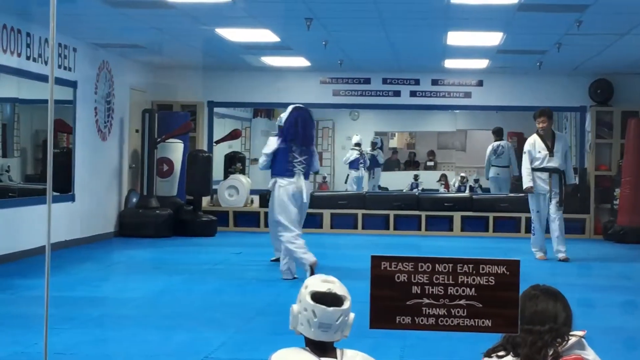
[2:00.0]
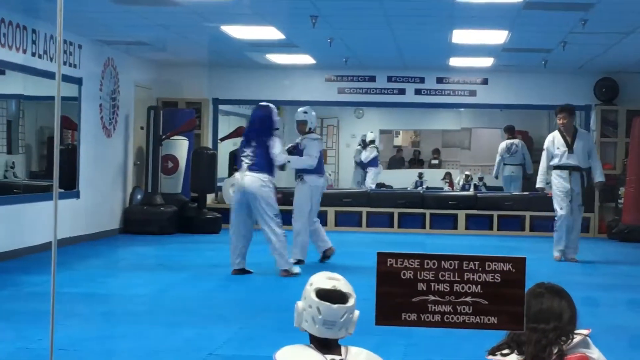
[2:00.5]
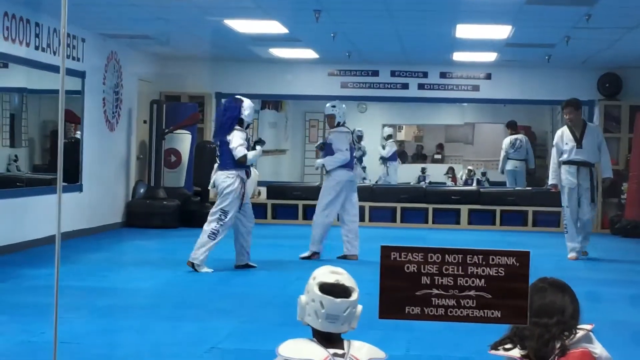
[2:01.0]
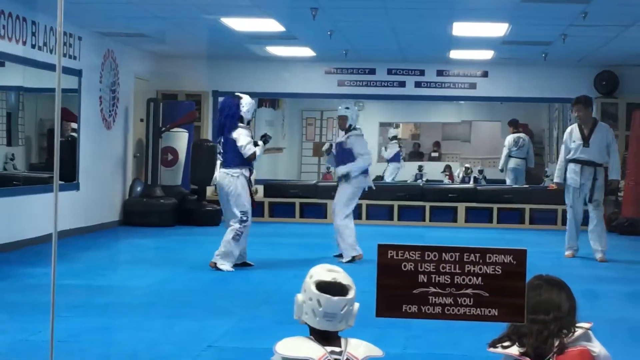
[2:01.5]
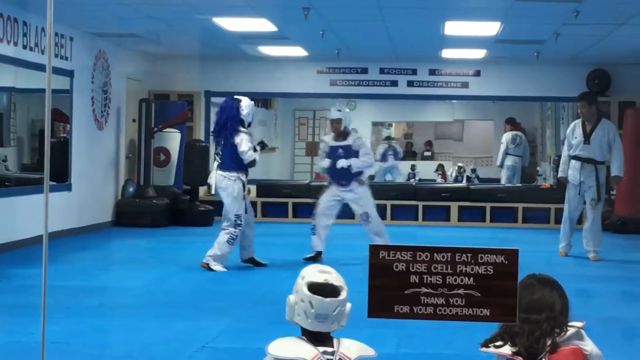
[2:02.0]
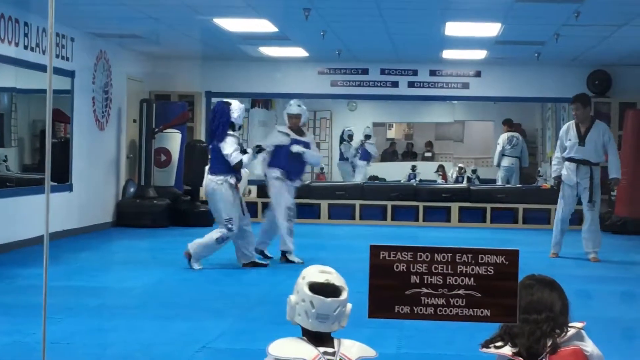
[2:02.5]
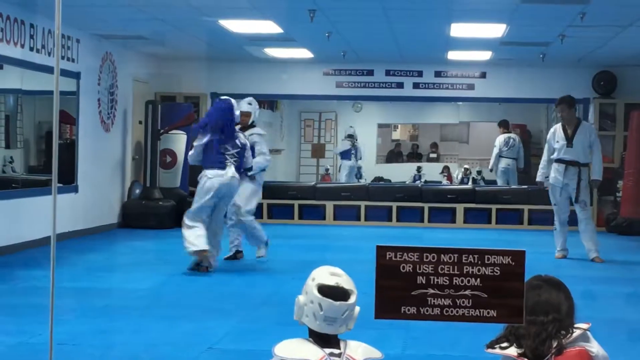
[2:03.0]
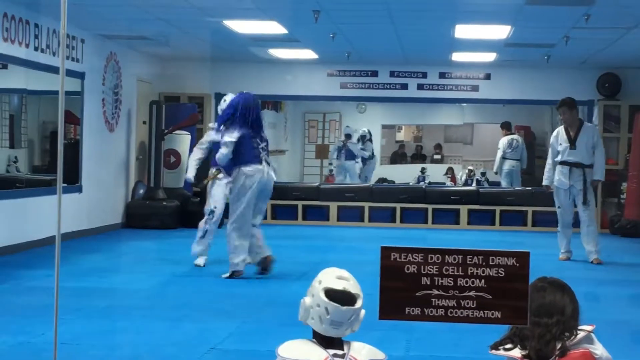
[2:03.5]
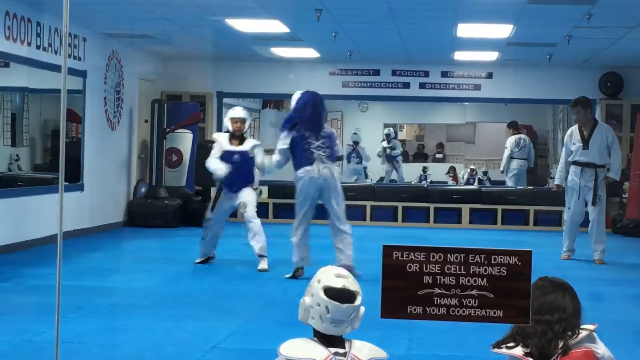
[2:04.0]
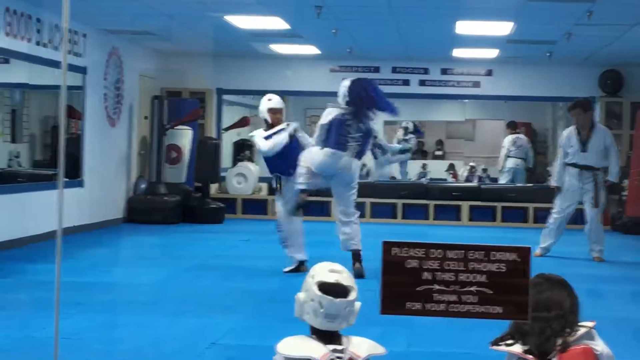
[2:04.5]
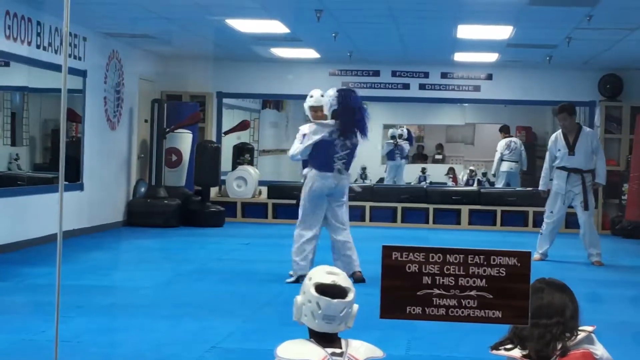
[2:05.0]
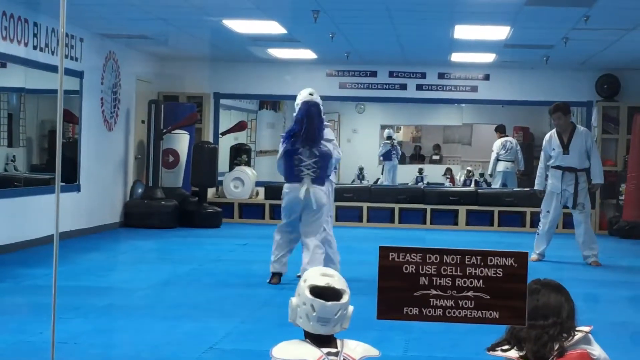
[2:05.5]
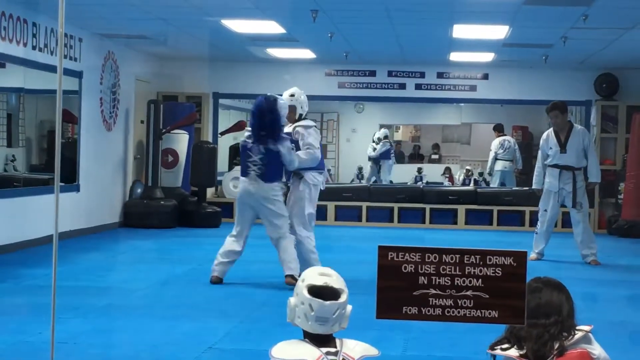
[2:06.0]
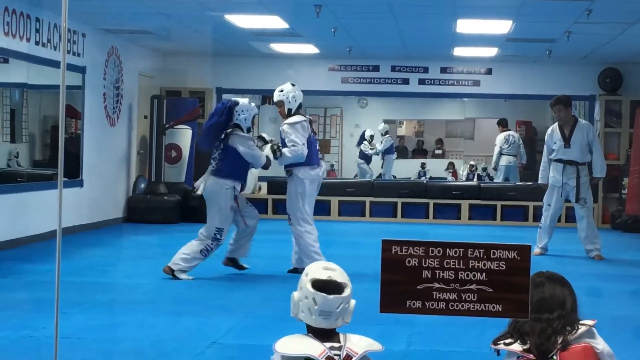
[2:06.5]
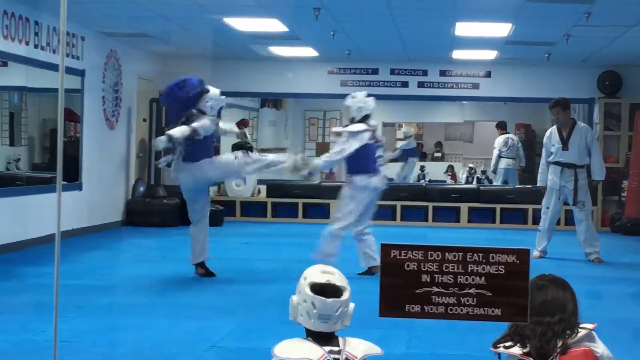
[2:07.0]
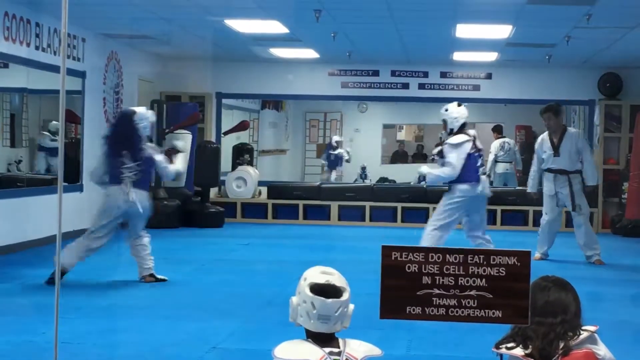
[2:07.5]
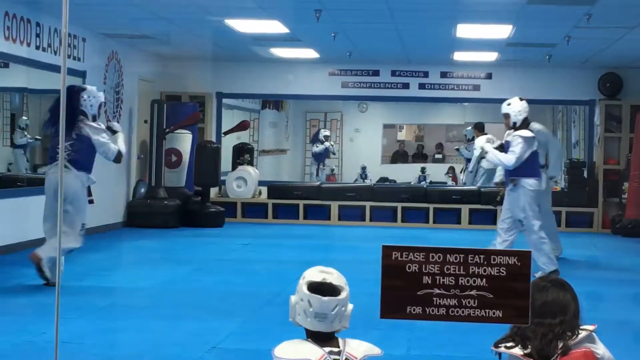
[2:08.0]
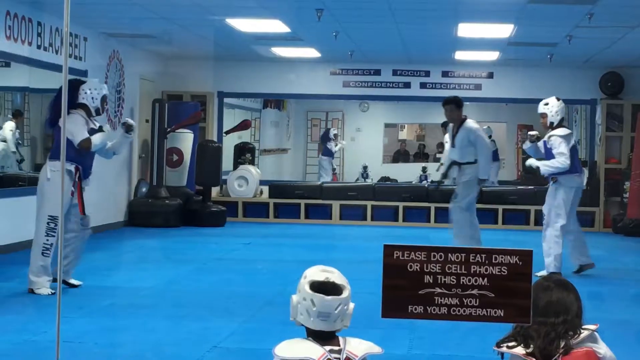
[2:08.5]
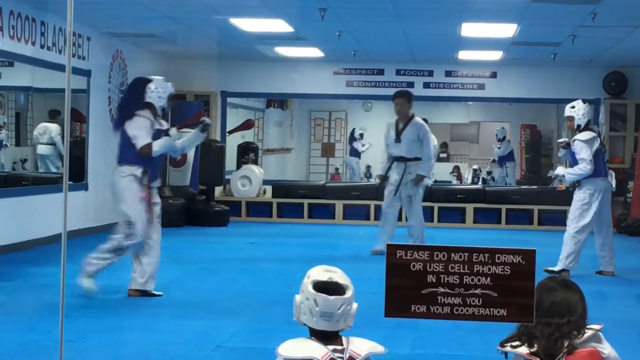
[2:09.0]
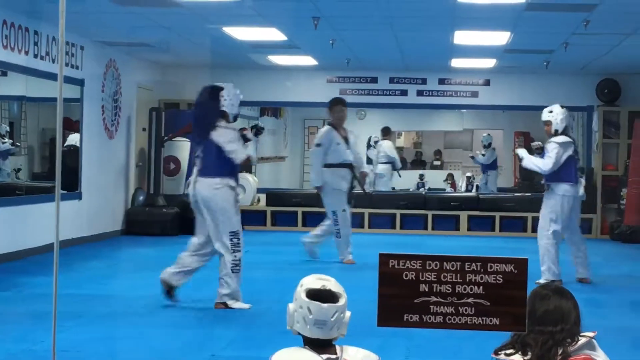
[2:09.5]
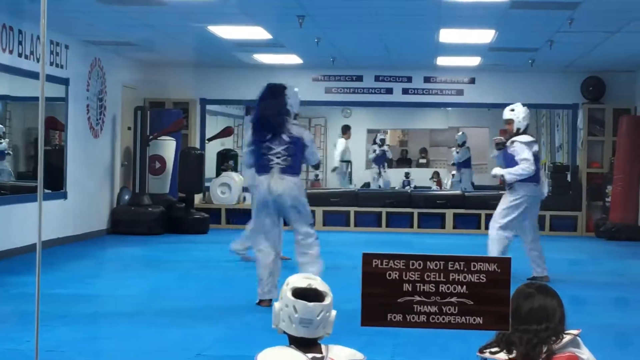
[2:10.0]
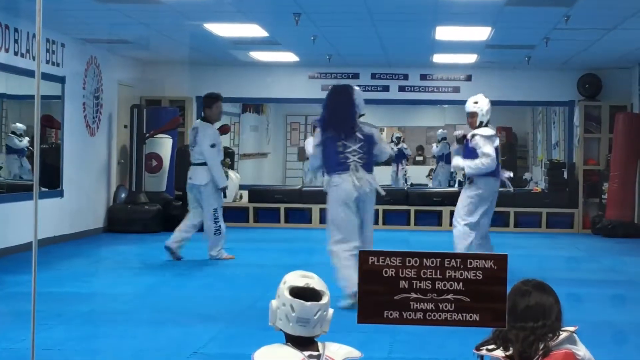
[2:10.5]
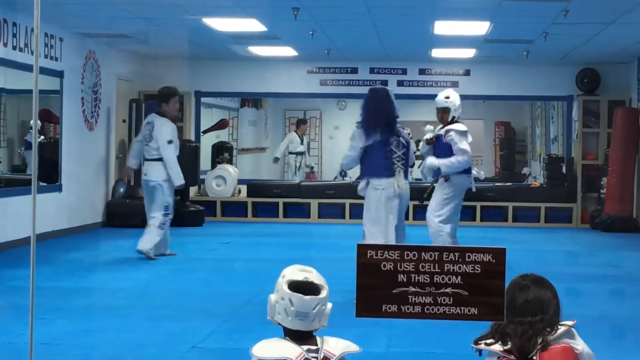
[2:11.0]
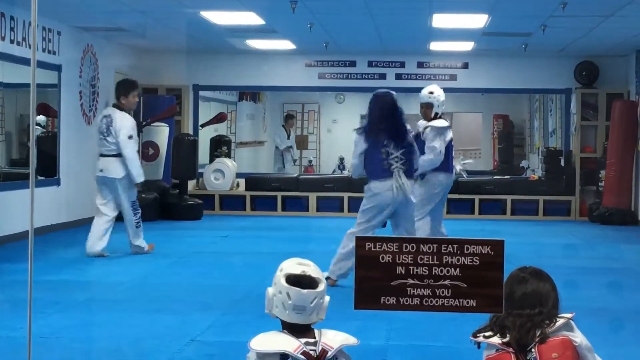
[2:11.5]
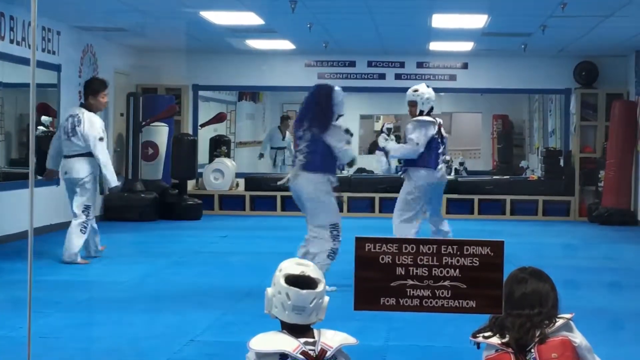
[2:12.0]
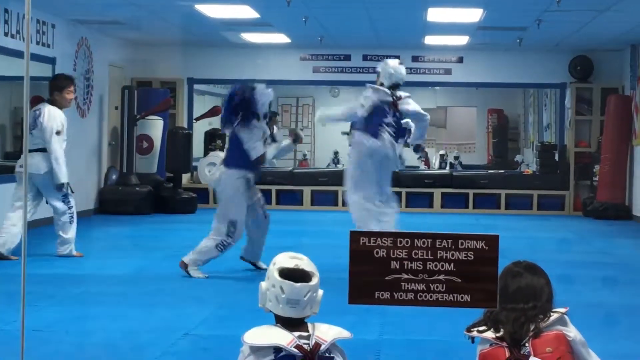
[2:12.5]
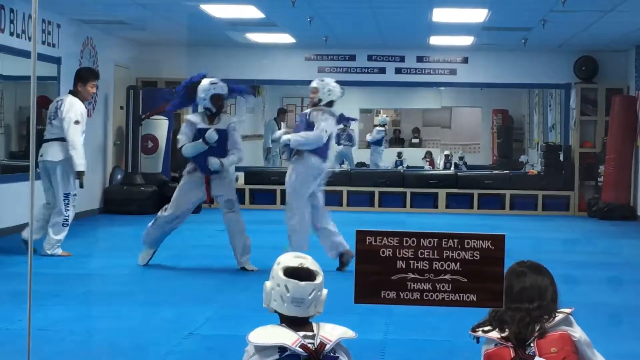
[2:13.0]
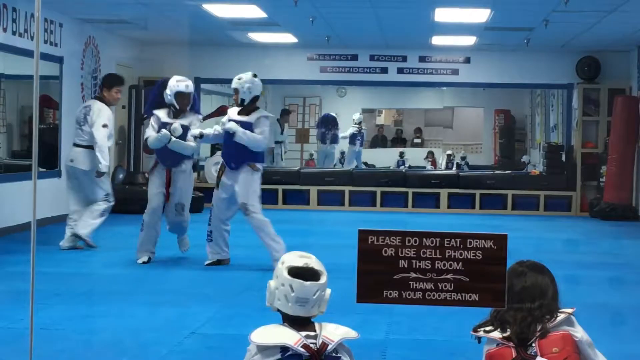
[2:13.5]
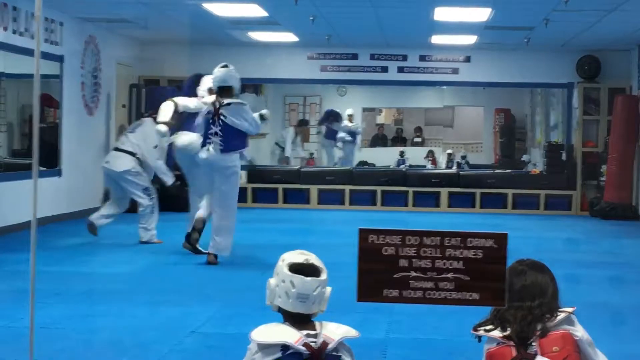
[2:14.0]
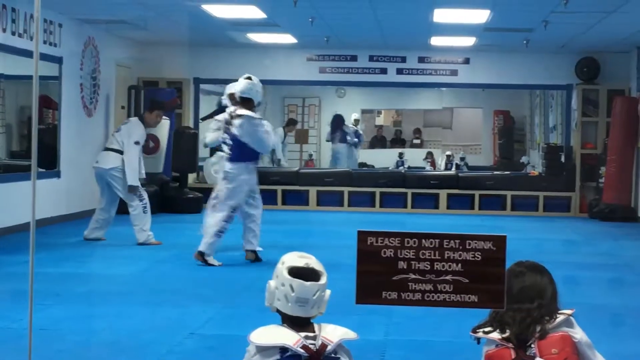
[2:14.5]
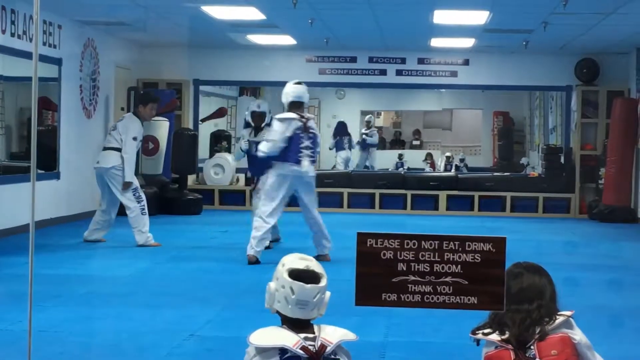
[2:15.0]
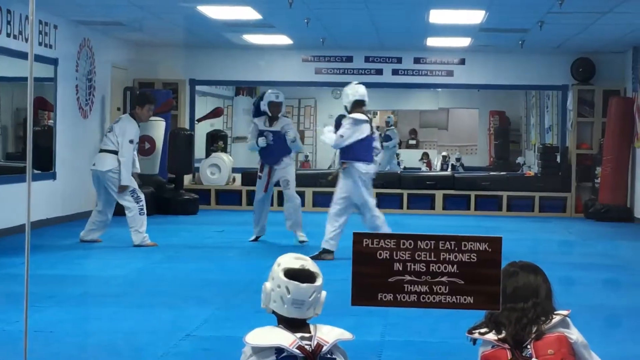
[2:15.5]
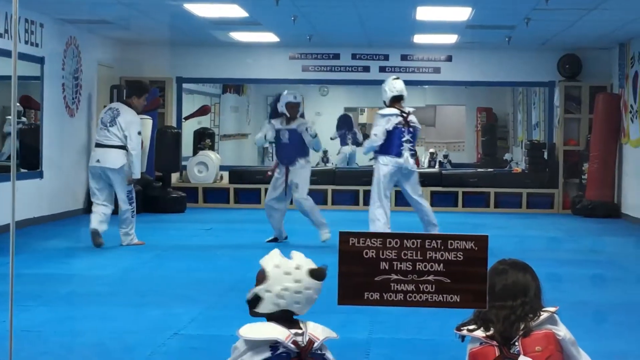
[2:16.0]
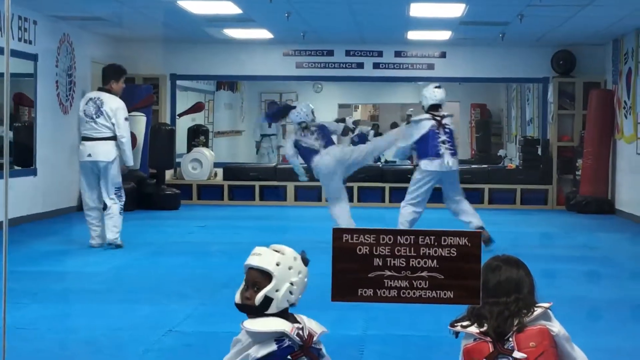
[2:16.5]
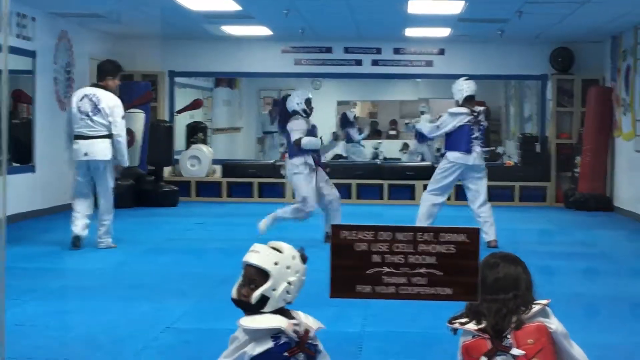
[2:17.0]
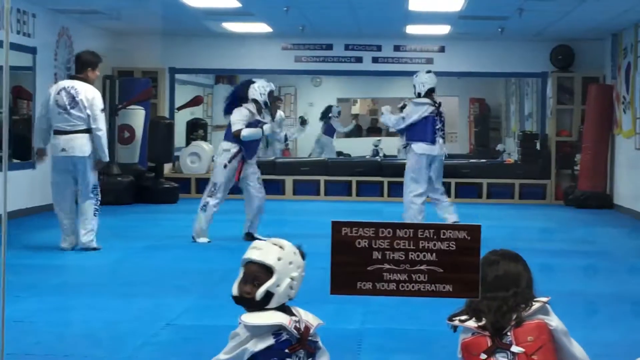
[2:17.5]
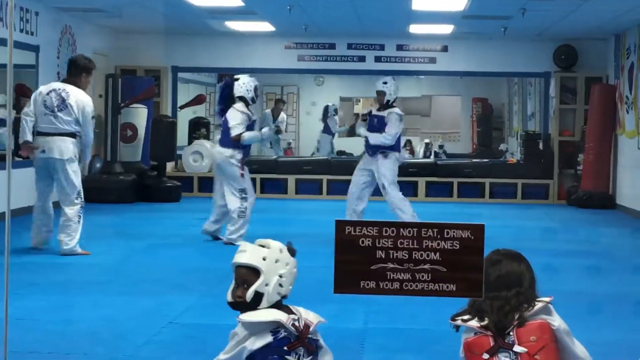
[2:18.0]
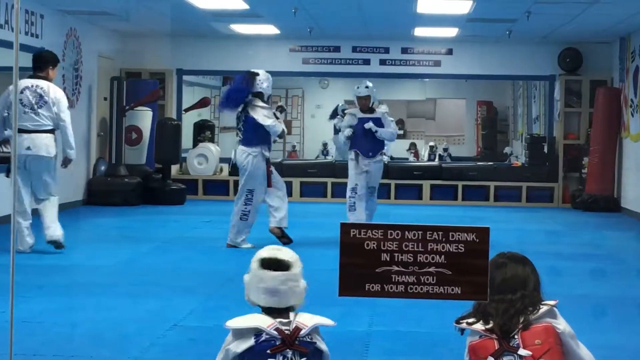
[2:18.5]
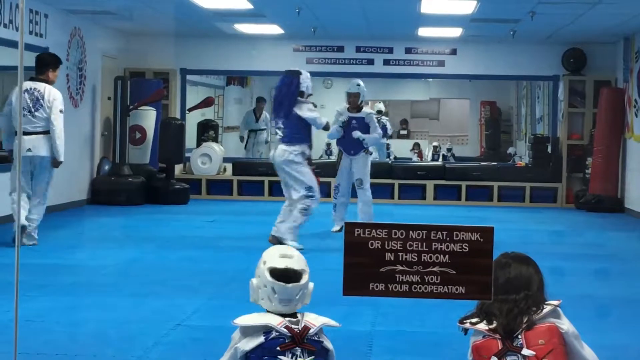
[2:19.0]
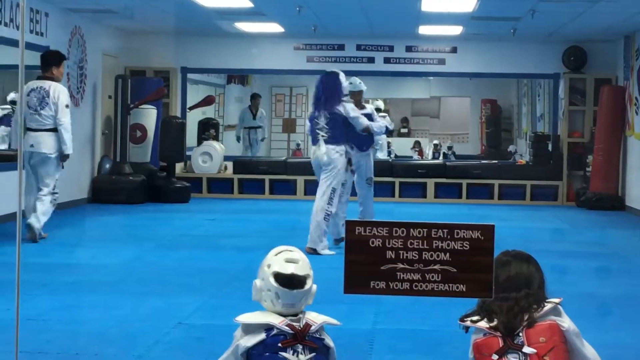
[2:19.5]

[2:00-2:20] The same sort of karate dojo-like area is shown, this time with the instructor starting off on the right in a white outfit with a black belt. The two fighters are on the left in very loose white clothing with blue protective vests and white headgear. There are two large mirrors, one behind them, rectangular and reflecting the studio, and one on the far left, and several square lights at the top of the ceiling. The two women make many leg movements and appear to attack each other with their legs, striking each other as they approach in the middle. The right woman does one kick and the left woman strikes back, then the left one does a spinning kick. The instructor backs up to make sure they have enough space for their movements. At the bottom middle is a sign that says "please do not eat, drink, or use cell phones in this room. Thank you for your cooperation." In the background mirror appears to be an adult, possibly parents of the children who are sitting down.